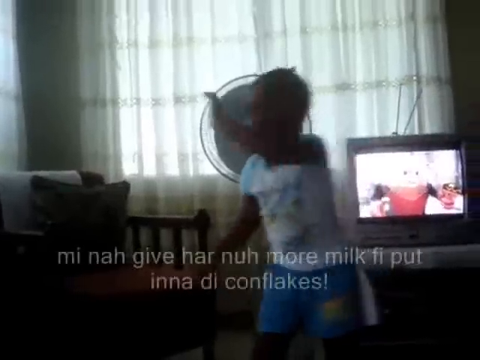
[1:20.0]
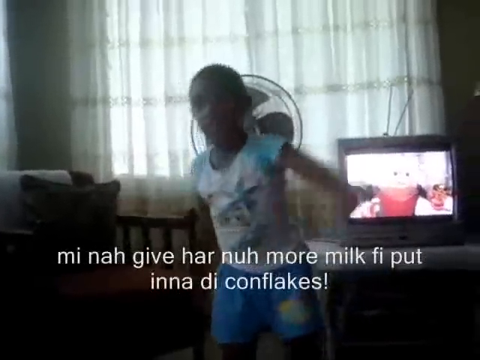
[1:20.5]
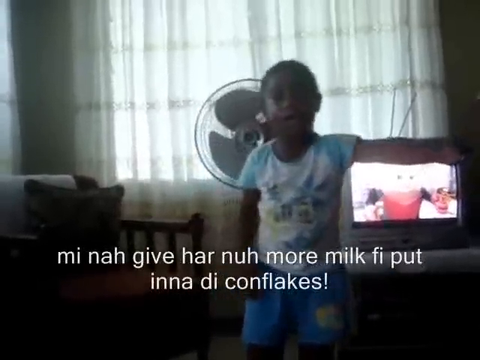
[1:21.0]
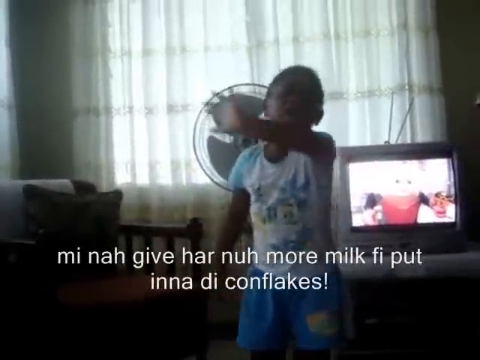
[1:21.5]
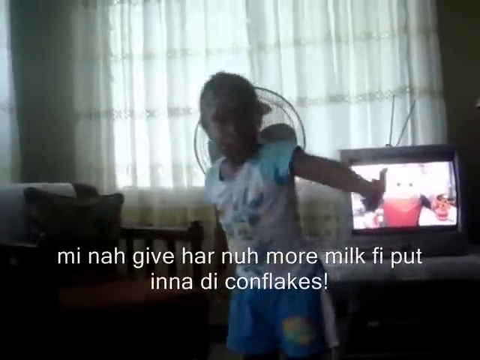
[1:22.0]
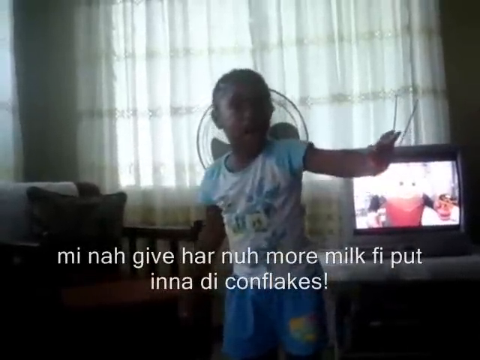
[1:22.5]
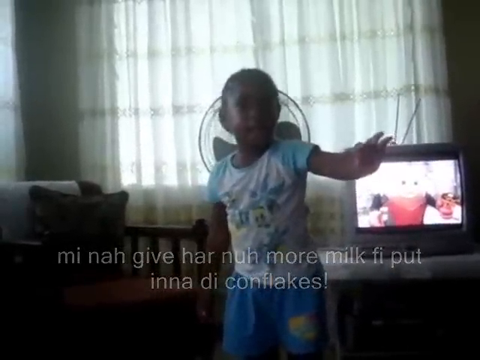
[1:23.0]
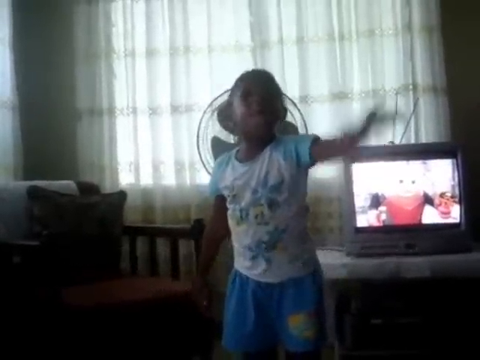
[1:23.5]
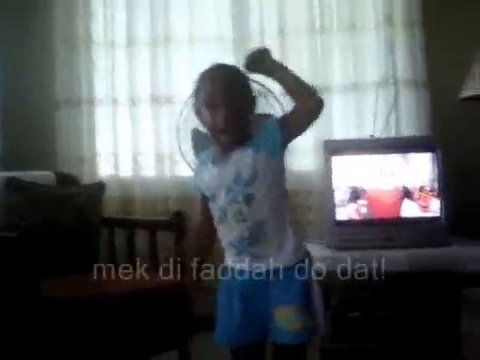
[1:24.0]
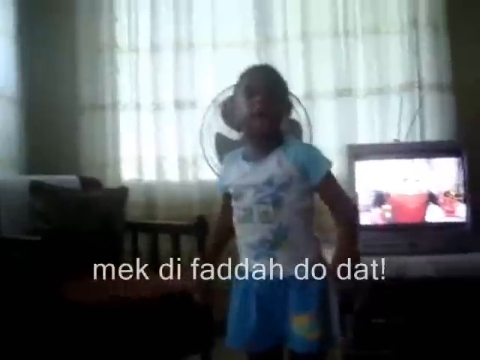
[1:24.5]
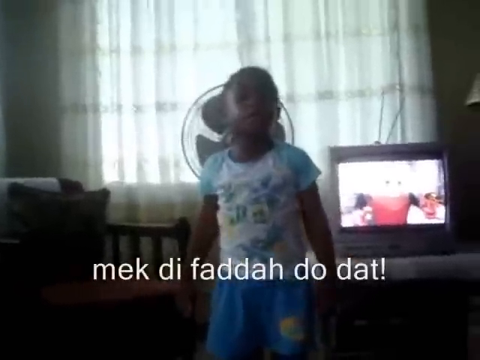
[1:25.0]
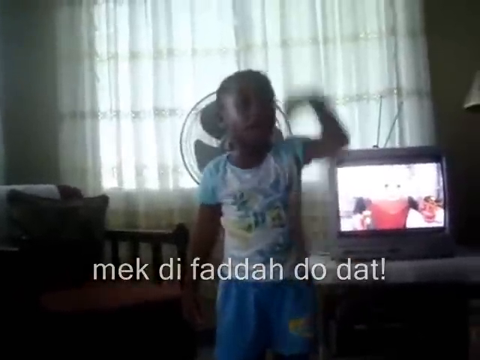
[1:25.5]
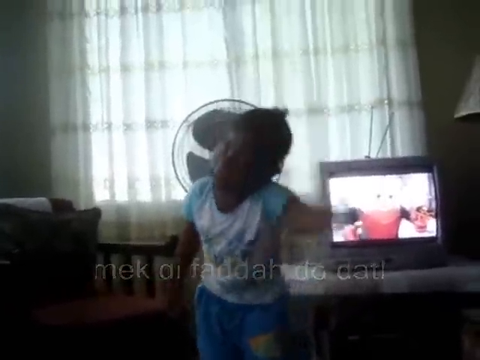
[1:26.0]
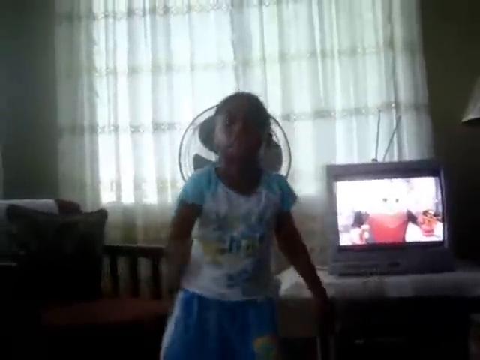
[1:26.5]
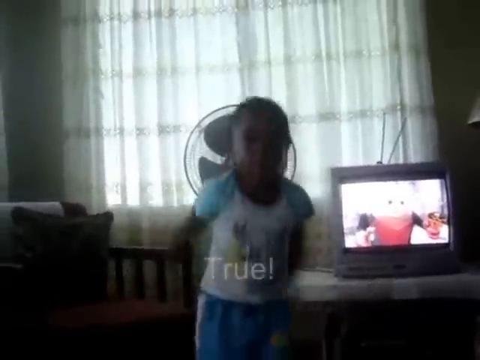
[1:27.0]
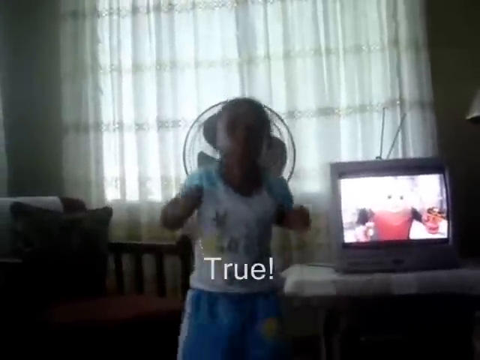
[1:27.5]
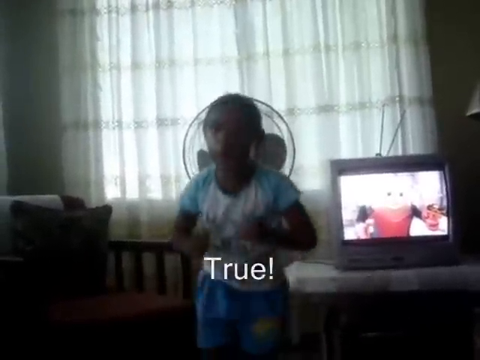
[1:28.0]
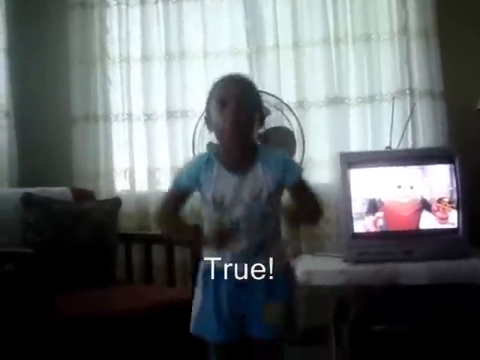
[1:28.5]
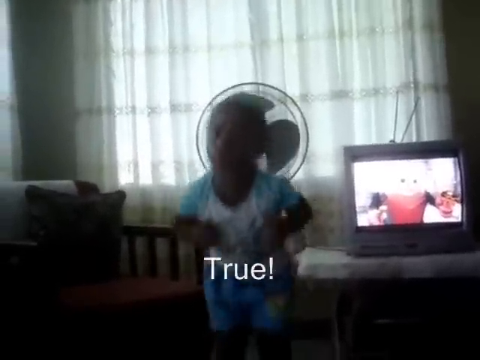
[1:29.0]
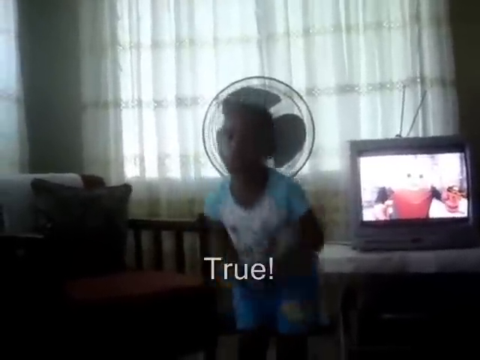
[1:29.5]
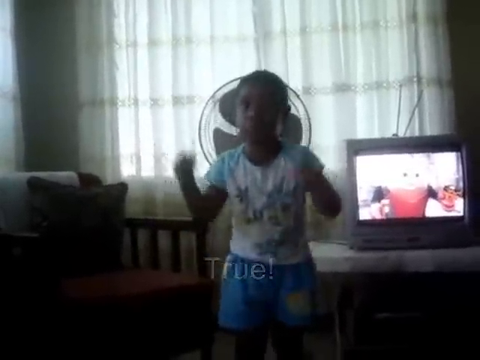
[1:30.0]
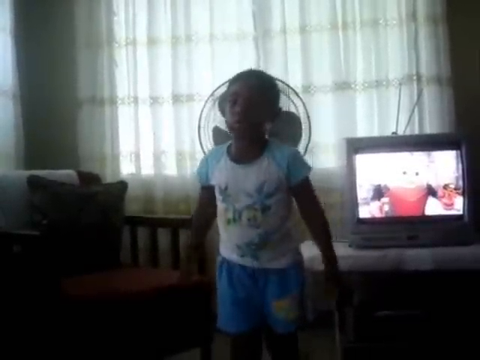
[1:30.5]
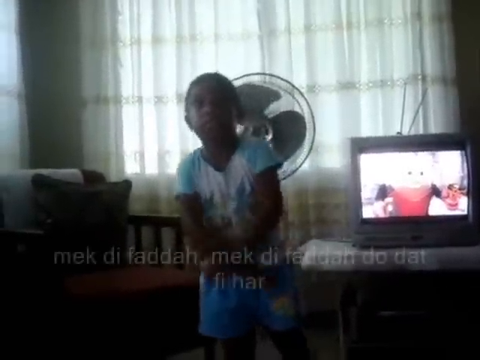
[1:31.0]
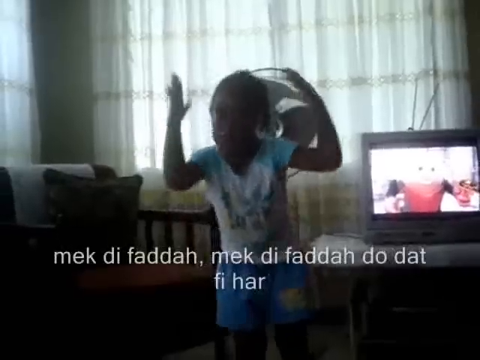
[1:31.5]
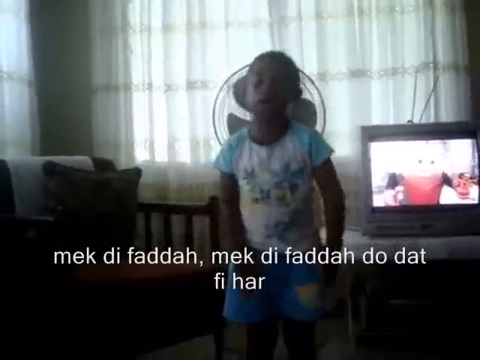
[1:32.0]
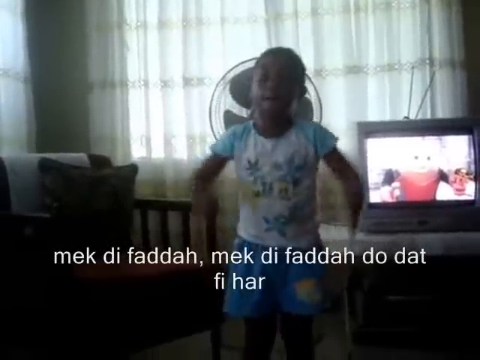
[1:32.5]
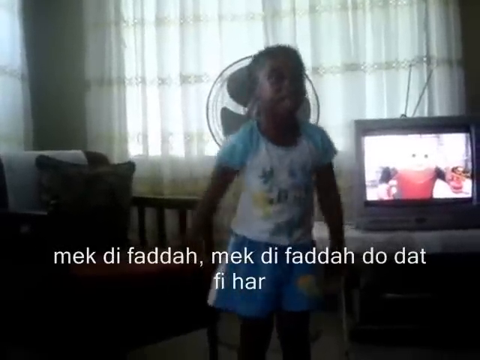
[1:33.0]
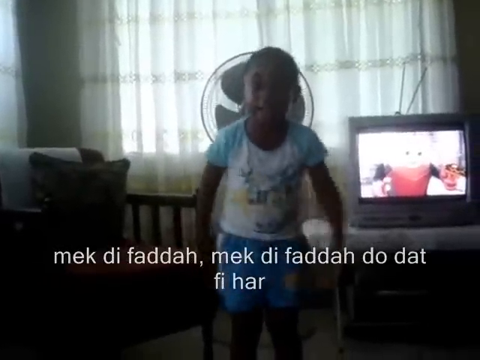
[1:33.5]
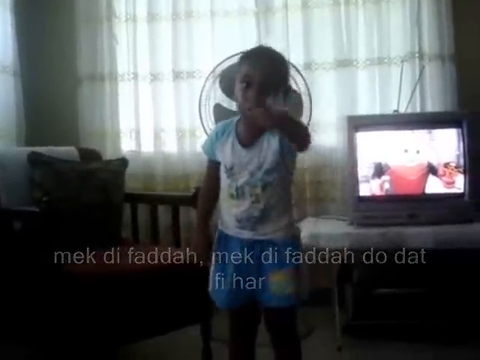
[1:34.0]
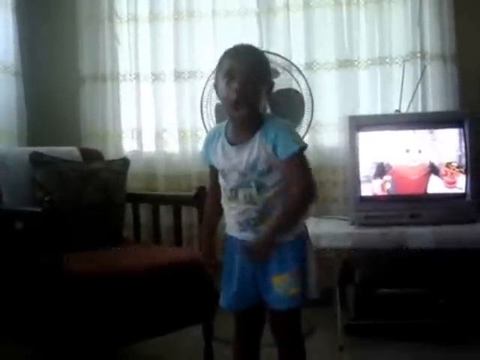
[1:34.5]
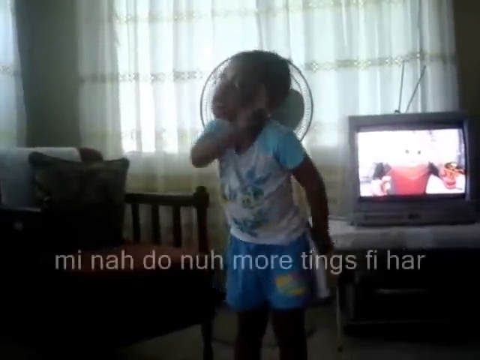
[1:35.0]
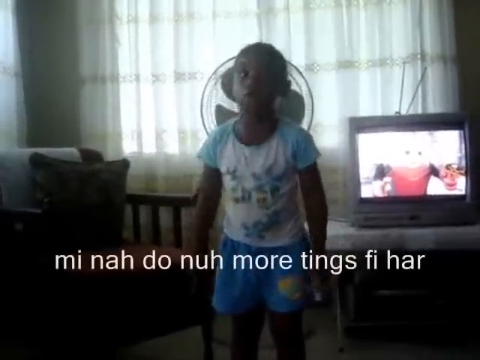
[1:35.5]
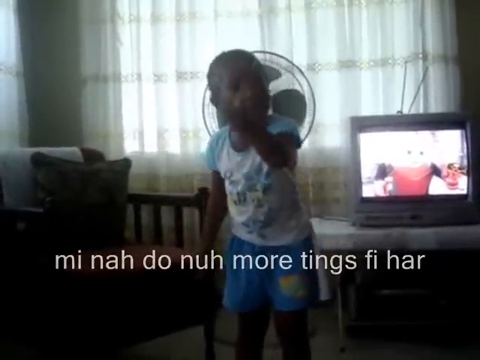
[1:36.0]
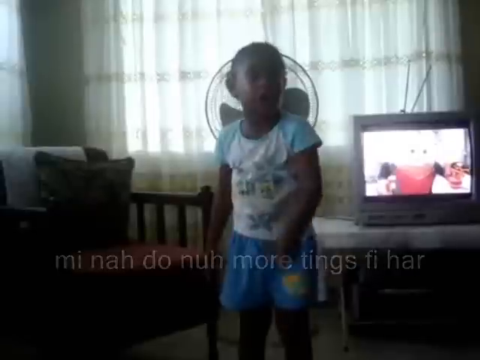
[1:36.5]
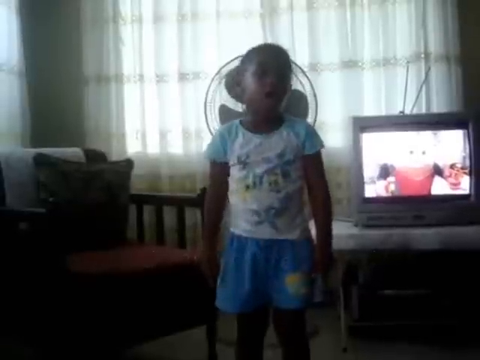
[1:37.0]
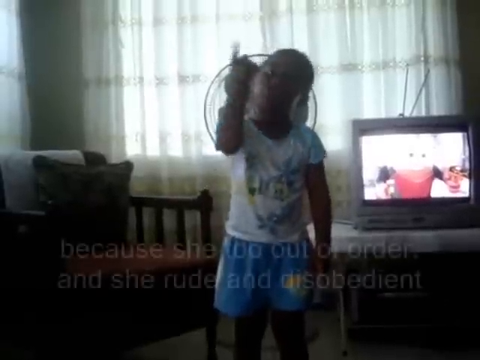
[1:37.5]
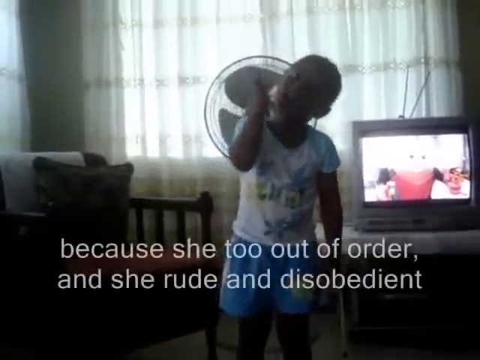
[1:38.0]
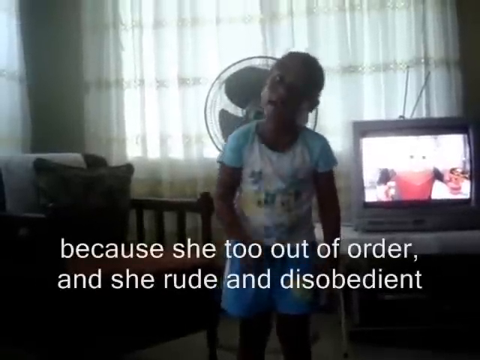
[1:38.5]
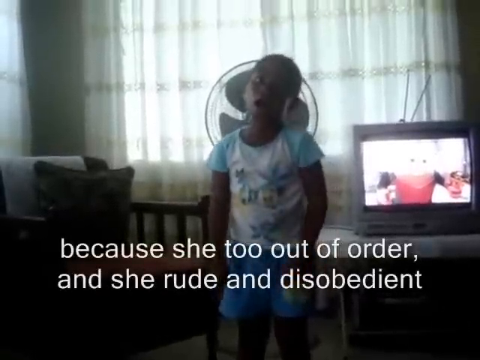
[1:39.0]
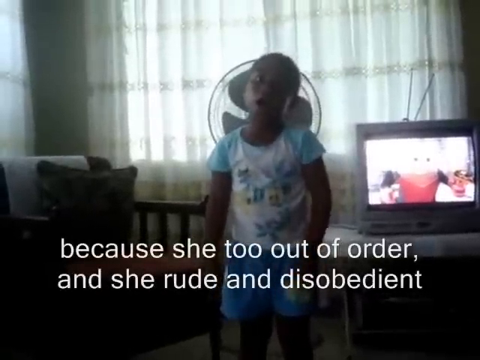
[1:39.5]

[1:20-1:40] The girl faces the camera, moving her left arm up and down while her right arm stays at her other side. As she speaks, she moves both arms up and down with both hands in fists, repeatedly bending her knees and standing back up. She seems to be demanding something she is not getting and seems quite upset, focusing on the person filming as she makes these erratic movements. The camera stays on her inside the dimly lit room, where the curtains are fully closed on the windows, so little natural light gets in. She seems to be reacting quite dramatically to whatever she is talking about.